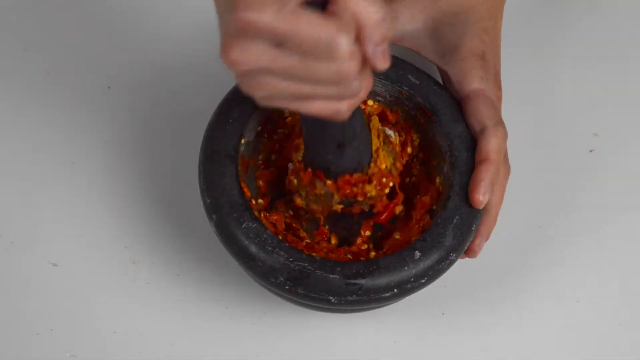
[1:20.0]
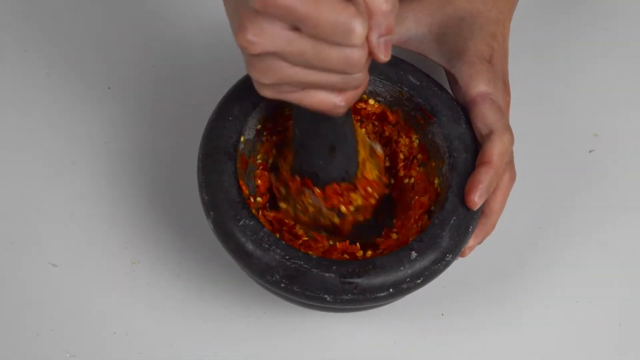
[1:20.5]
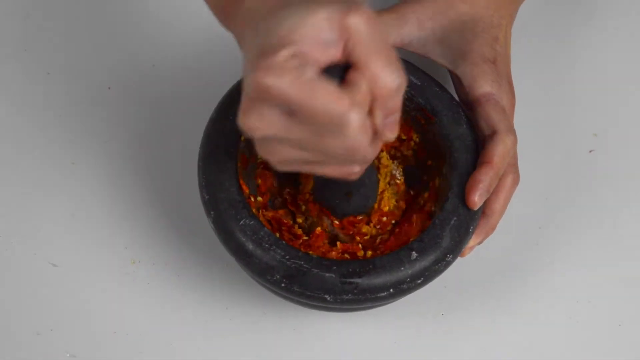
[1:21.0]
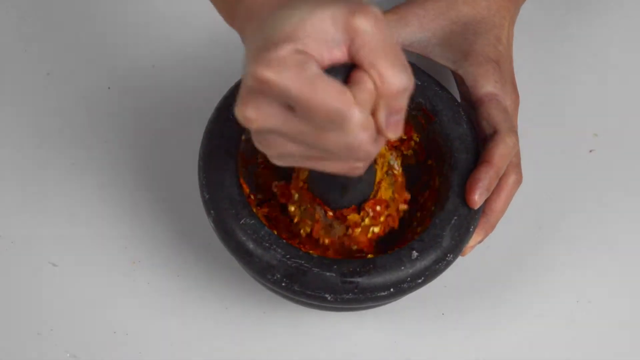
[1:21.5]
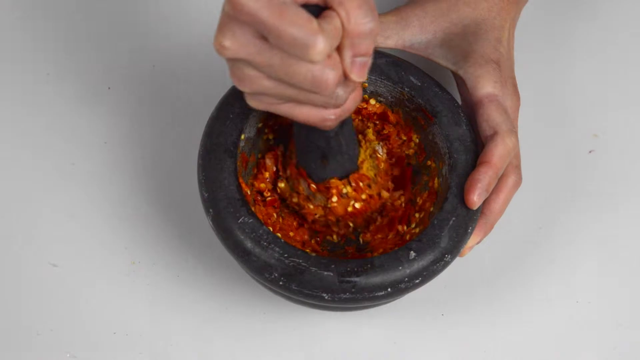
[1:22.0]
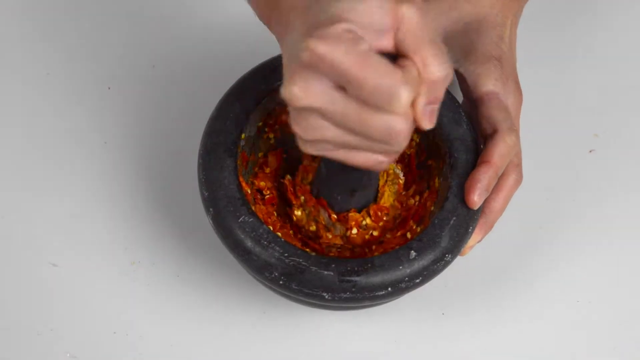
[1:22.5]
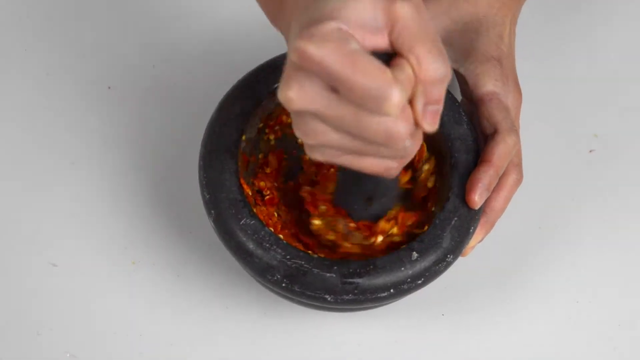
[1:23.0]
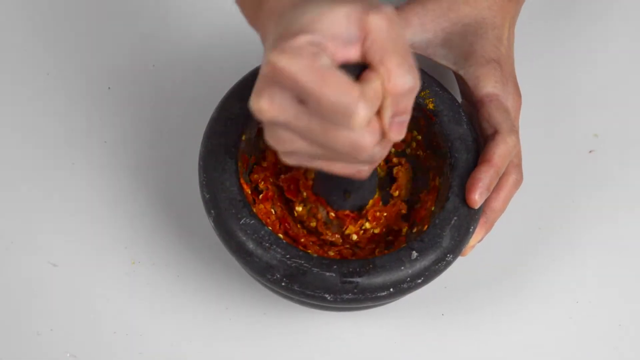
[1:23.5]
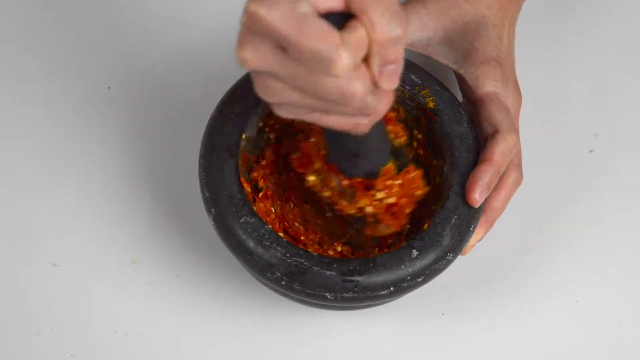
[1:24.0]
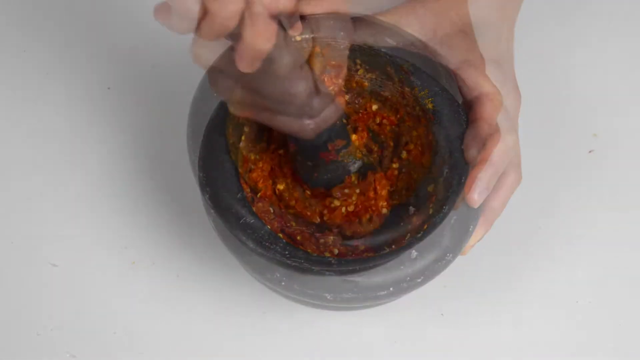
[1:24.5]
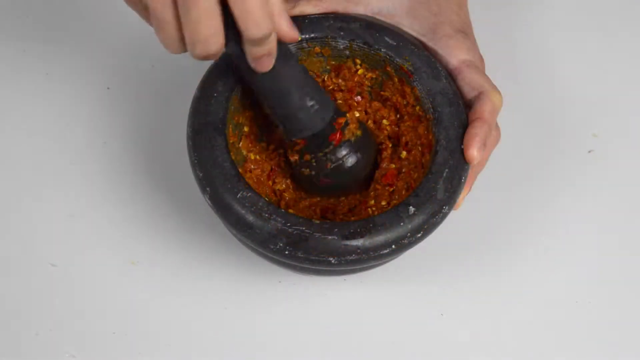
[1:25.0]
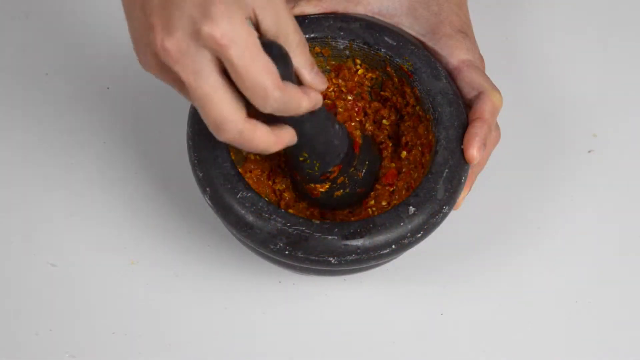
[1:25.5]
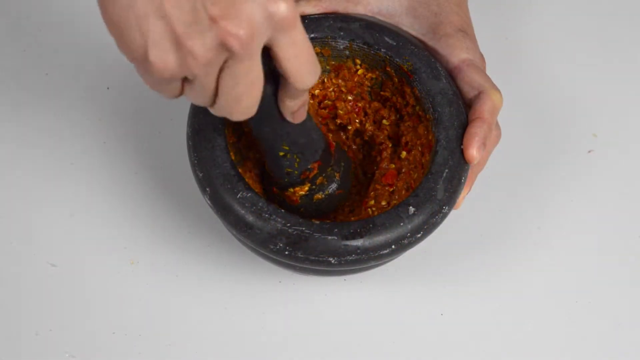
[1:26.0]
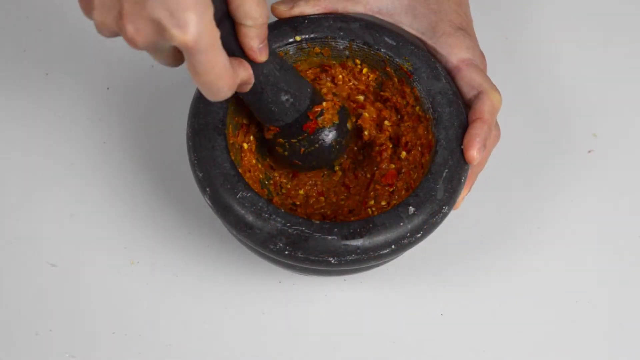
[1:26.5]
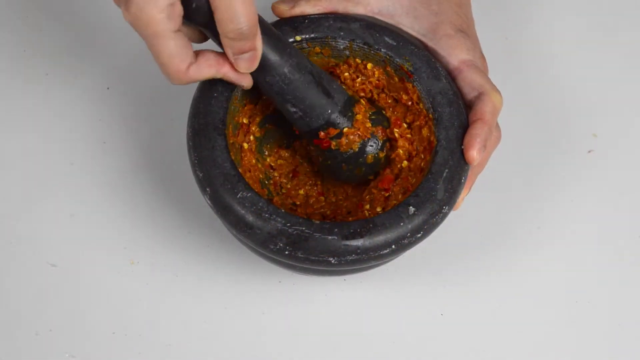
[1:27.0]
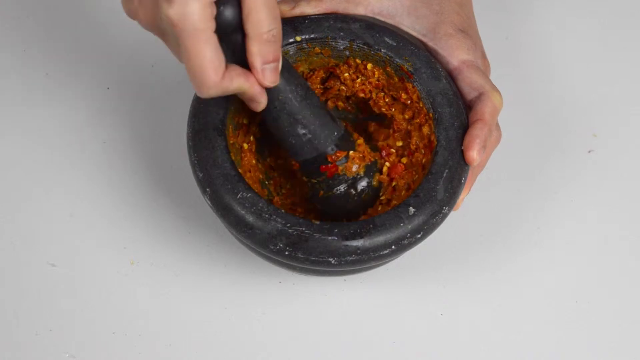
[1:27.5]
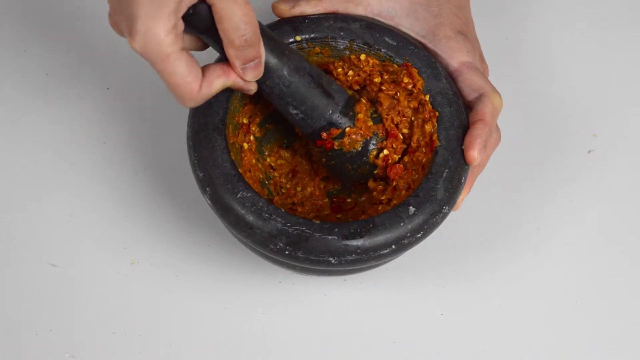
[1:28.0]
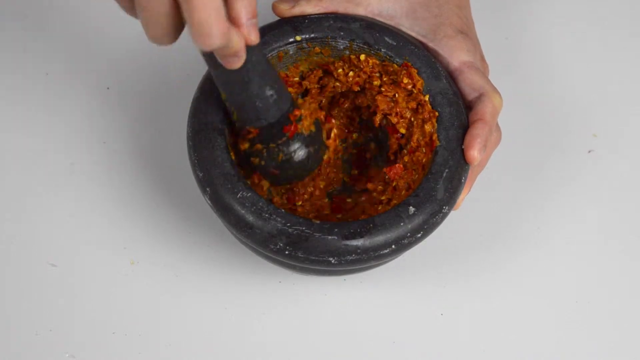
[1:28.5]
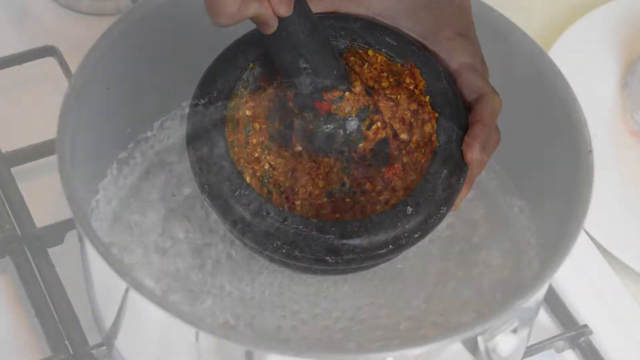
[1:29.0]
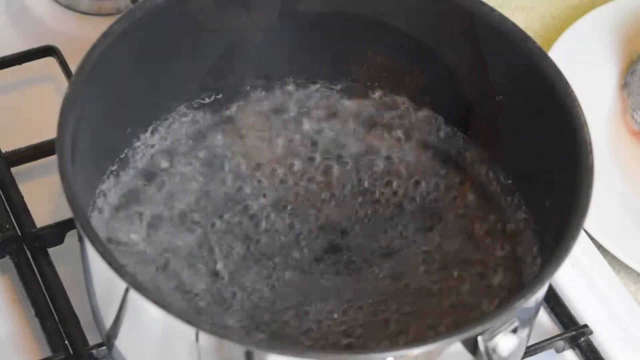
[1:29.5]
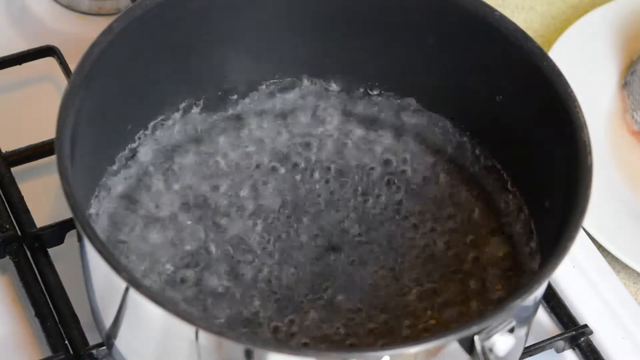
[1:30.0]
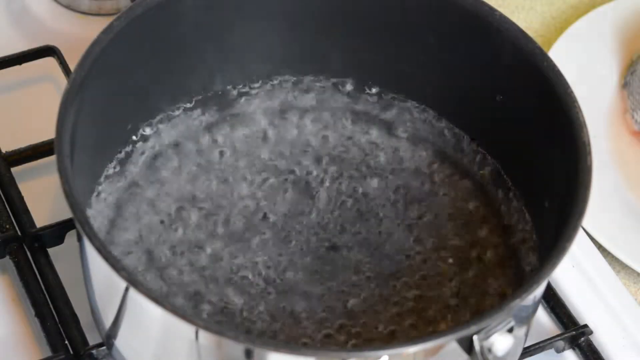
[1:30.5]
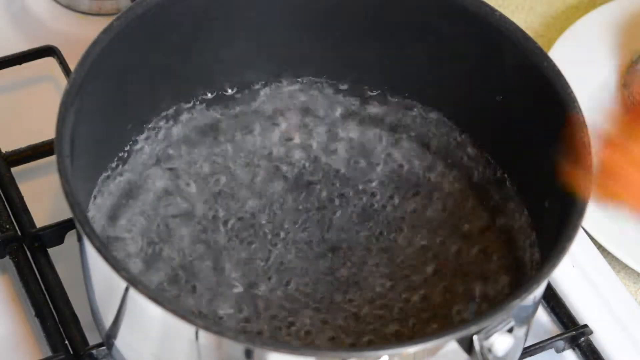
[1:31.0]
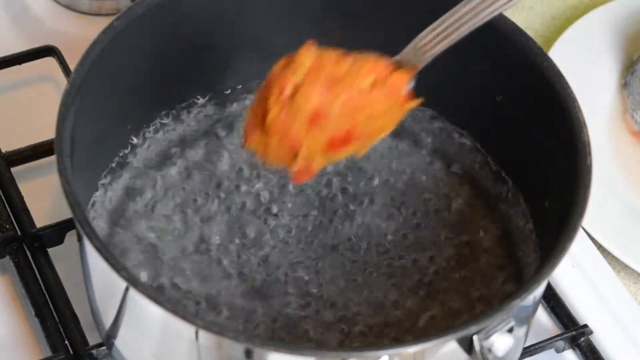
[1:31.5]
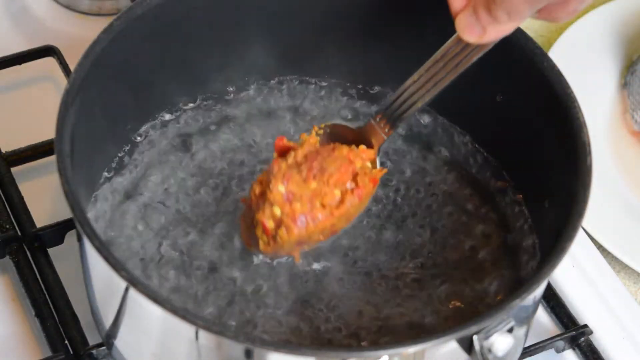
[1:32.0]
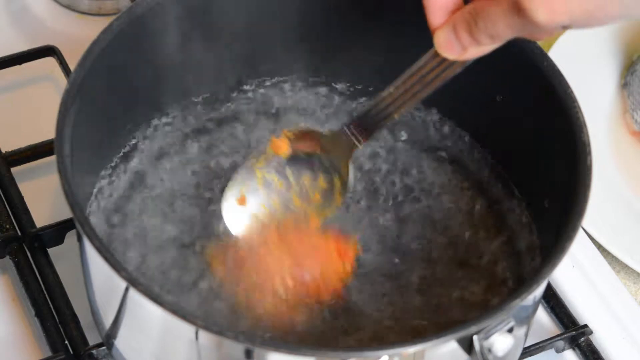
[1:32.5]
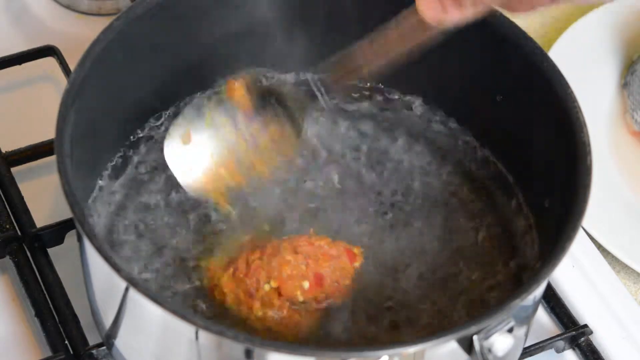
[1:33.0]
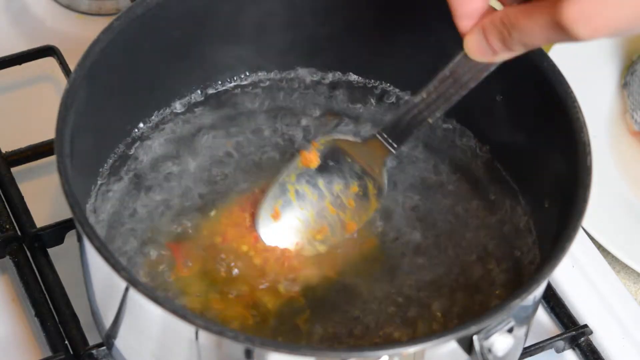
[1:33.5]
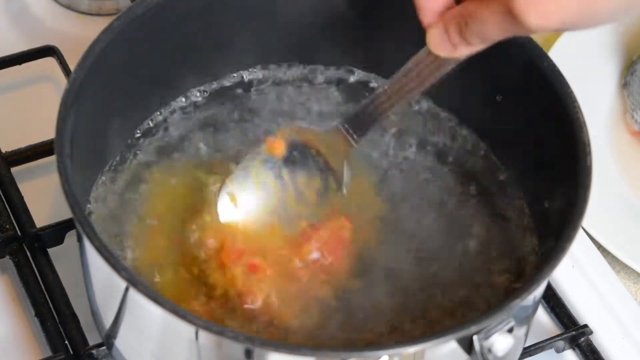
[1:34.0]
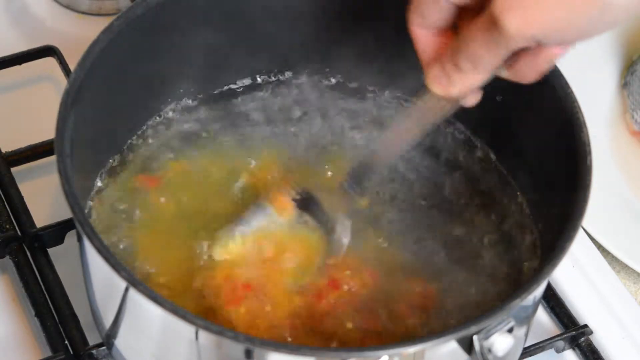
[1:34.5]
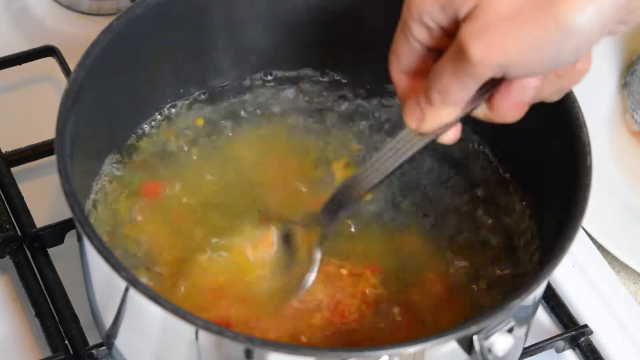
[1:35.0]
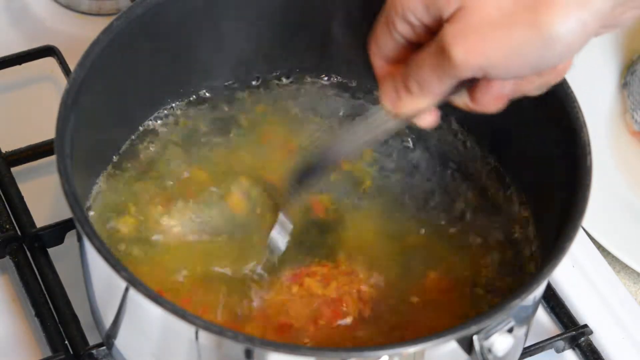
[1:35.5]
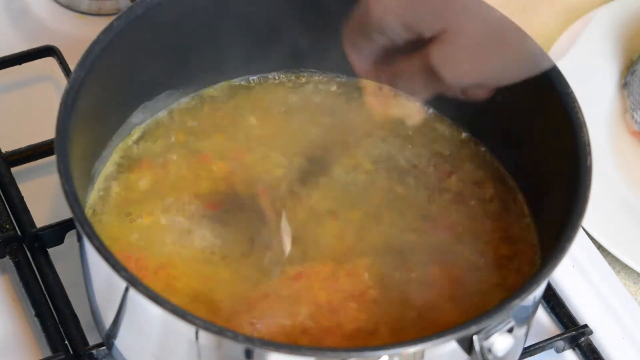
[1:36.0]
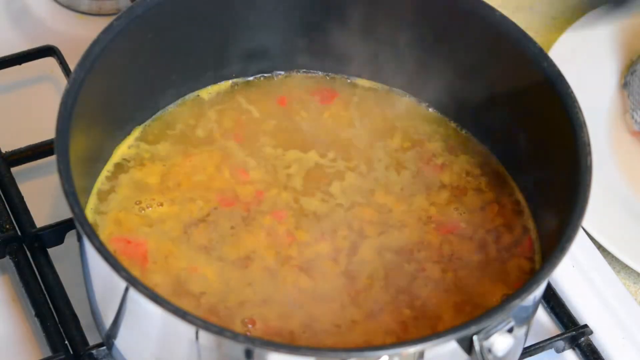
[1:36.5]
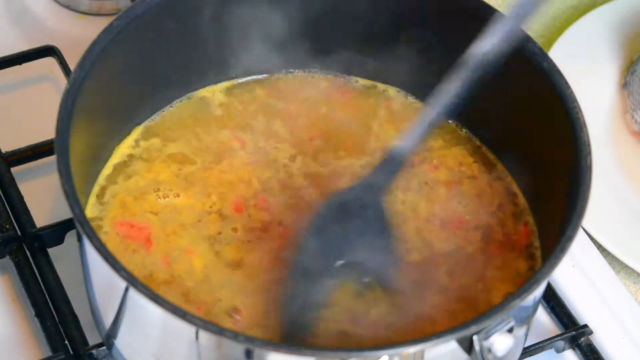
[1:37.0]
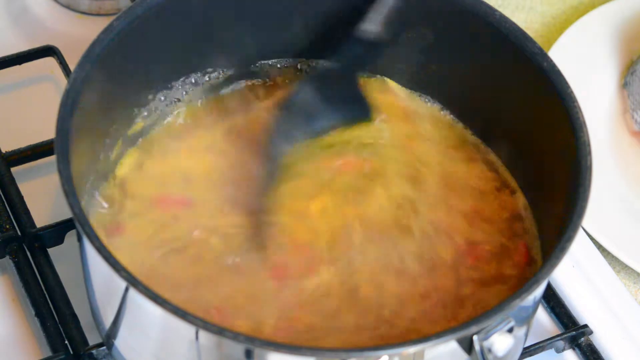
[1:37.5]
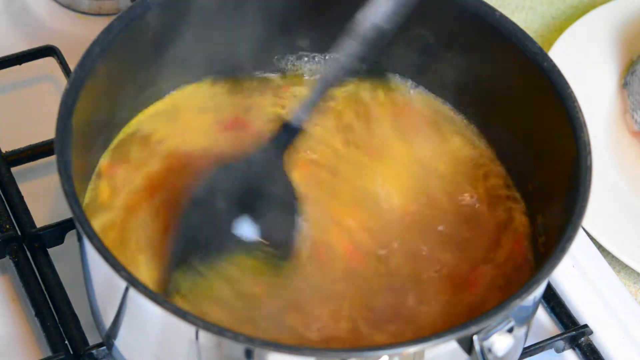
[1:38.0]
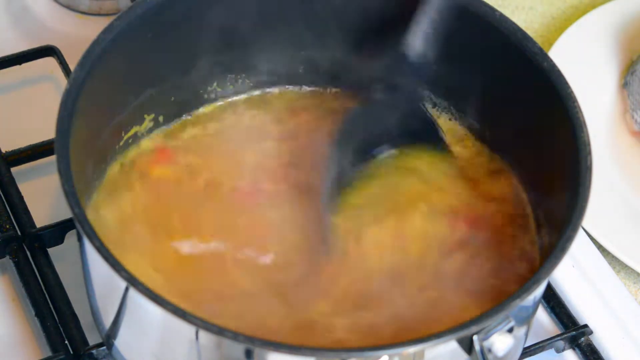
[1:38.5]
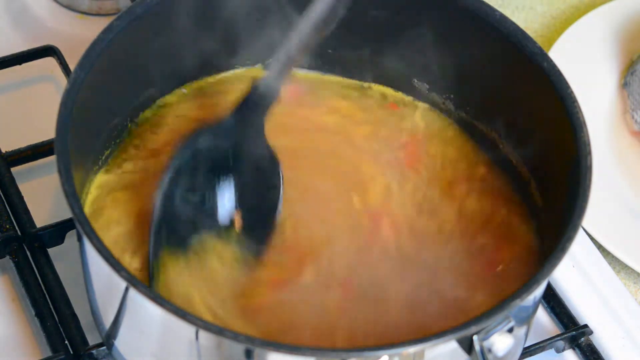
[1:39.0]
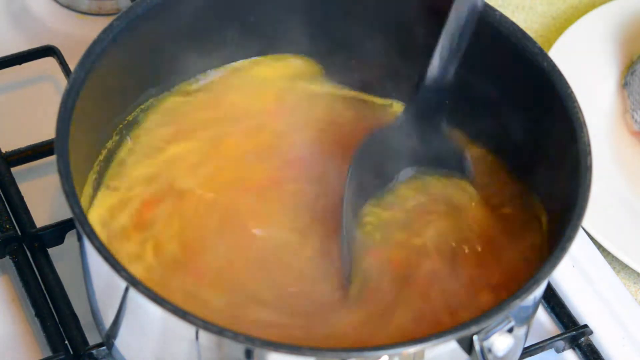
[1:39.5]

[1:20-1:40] A hand is busy mixing some chili, apparently with other sauces or spices, and keeps mixing until nothing can be separated. A pot of boiling water follows; the amount of water is medium, not a lot. The hand takes the mixture and puts it into the boiling water, then stirs it with a big black and silver spoon, stirring until it becomes yellow and is mixed together.